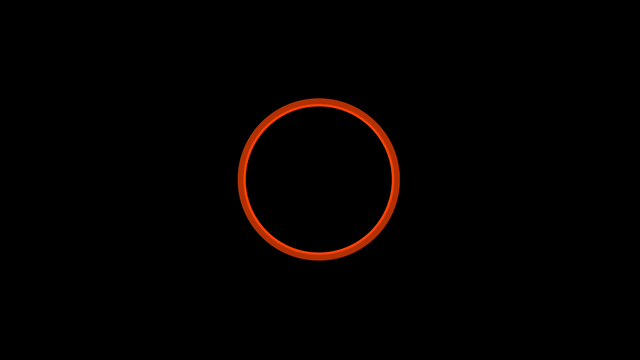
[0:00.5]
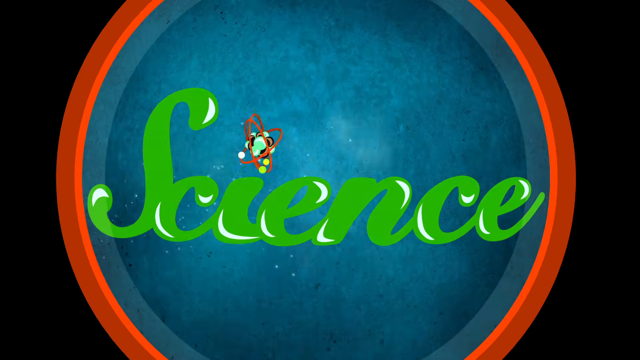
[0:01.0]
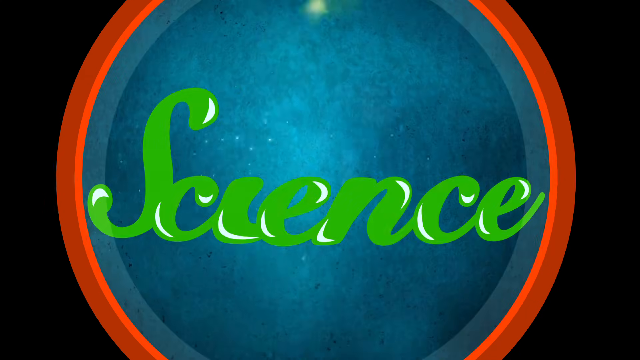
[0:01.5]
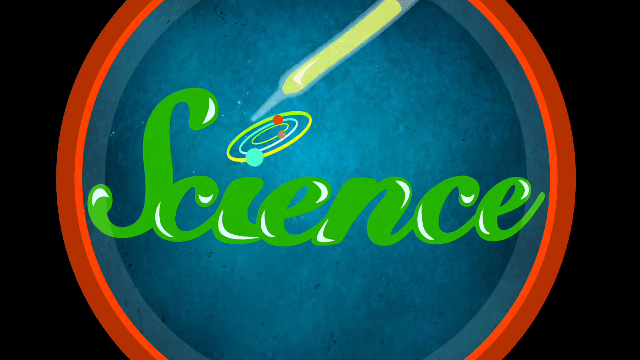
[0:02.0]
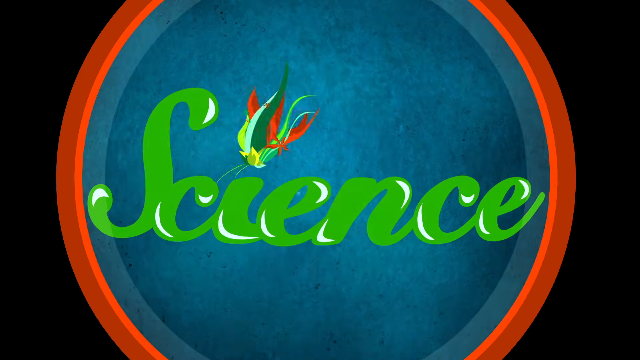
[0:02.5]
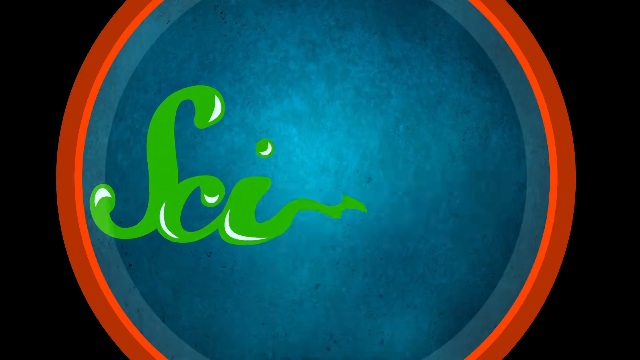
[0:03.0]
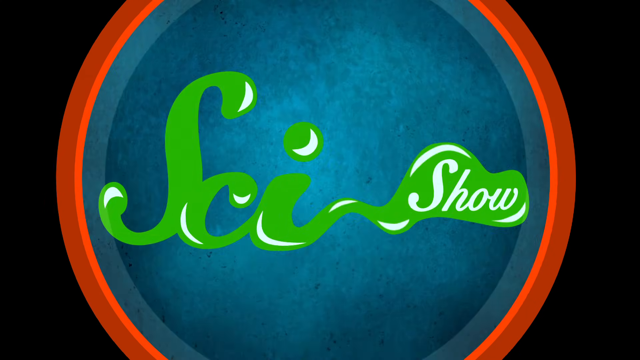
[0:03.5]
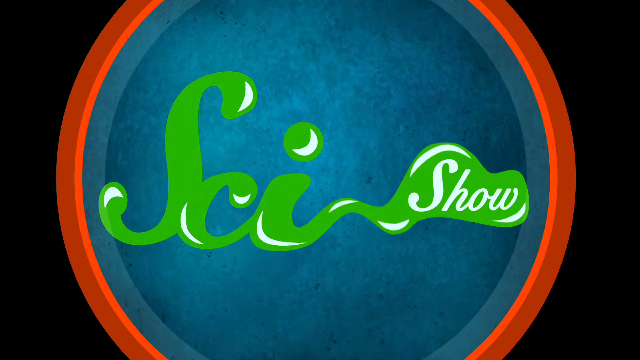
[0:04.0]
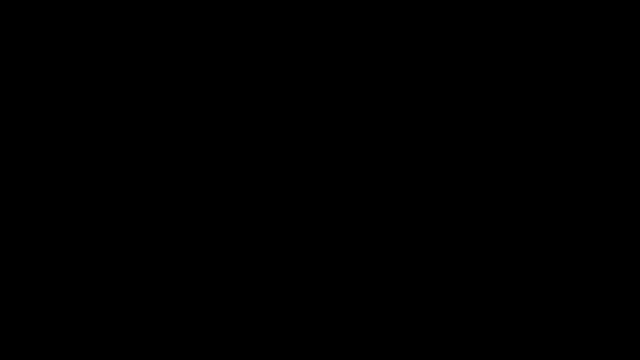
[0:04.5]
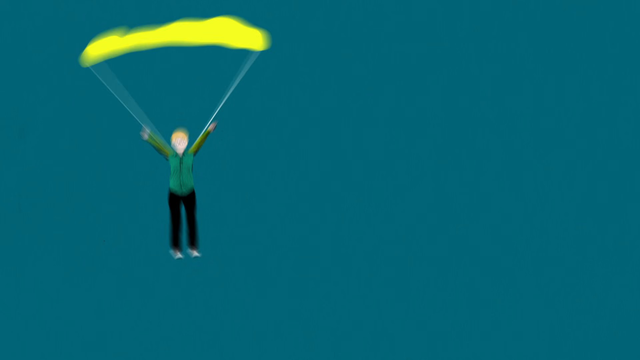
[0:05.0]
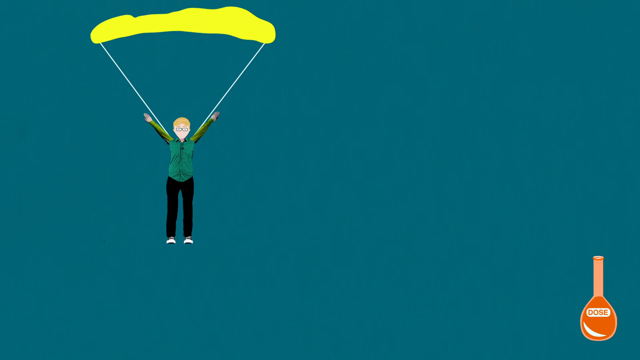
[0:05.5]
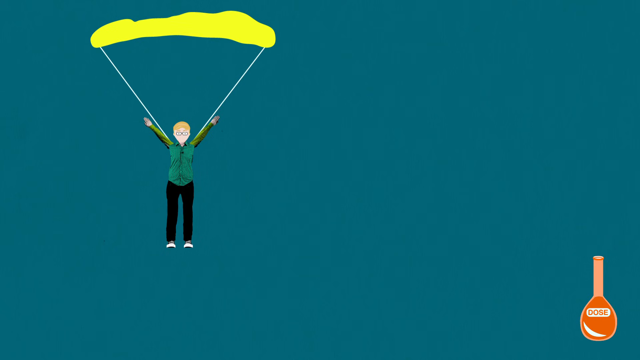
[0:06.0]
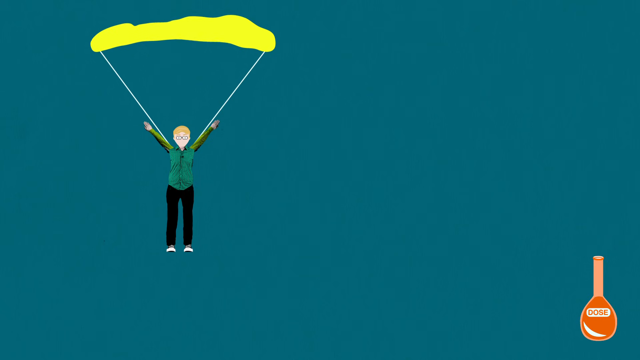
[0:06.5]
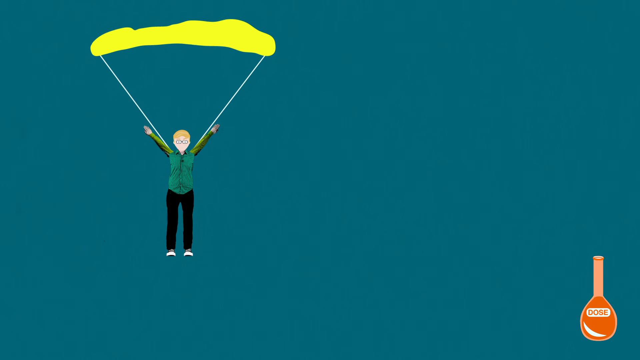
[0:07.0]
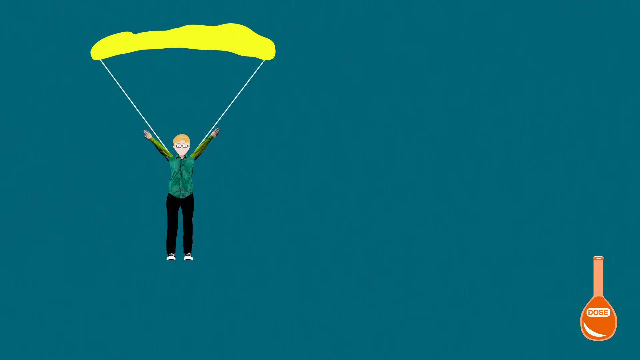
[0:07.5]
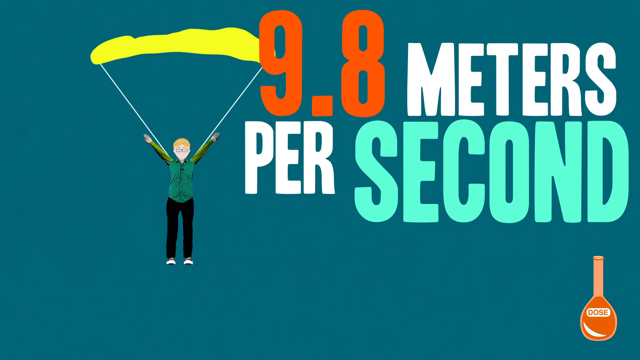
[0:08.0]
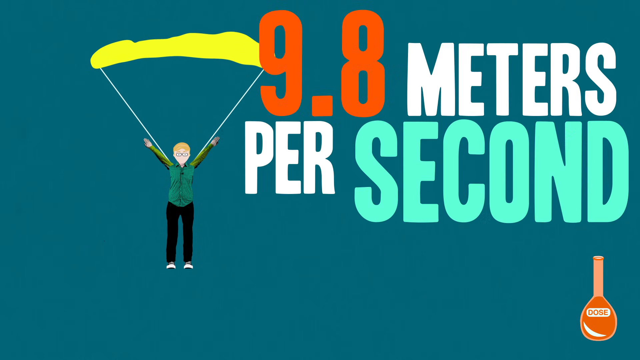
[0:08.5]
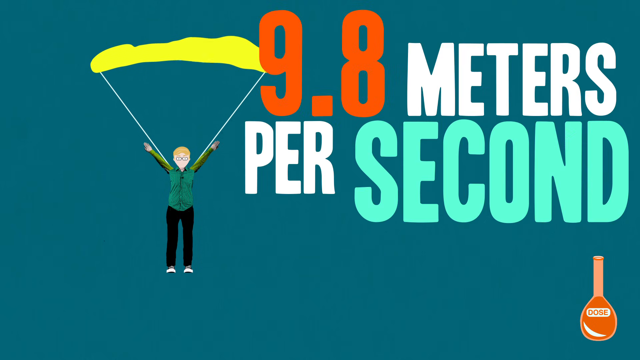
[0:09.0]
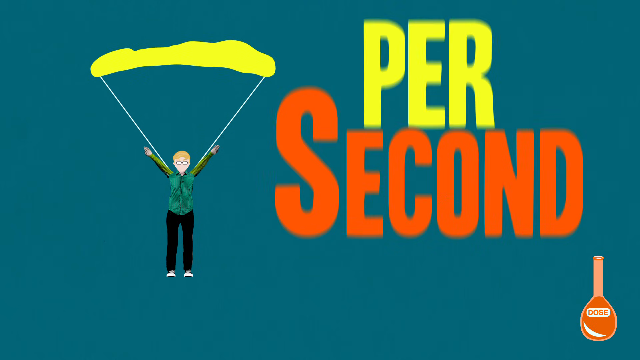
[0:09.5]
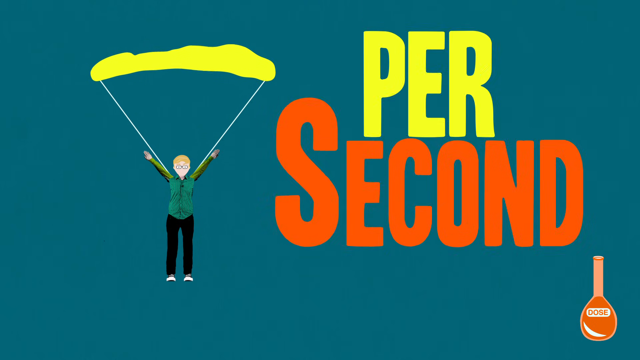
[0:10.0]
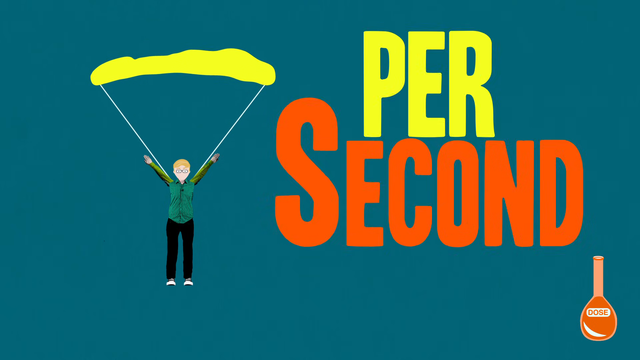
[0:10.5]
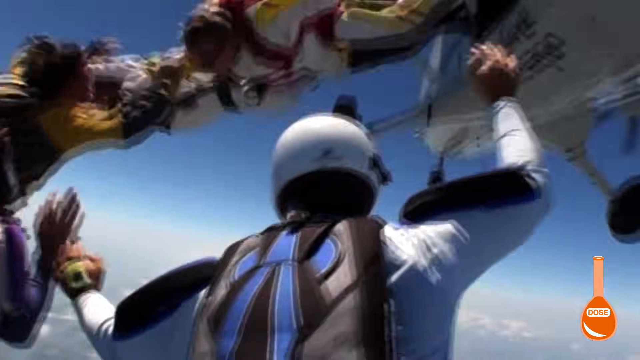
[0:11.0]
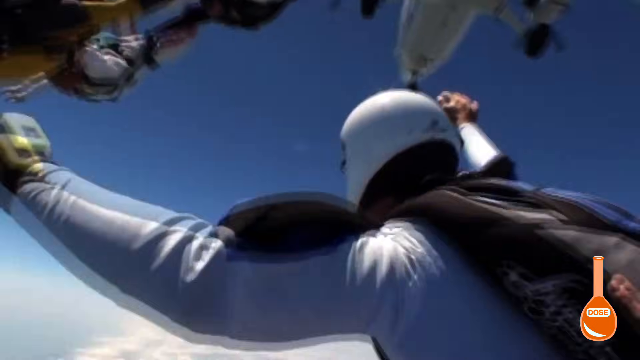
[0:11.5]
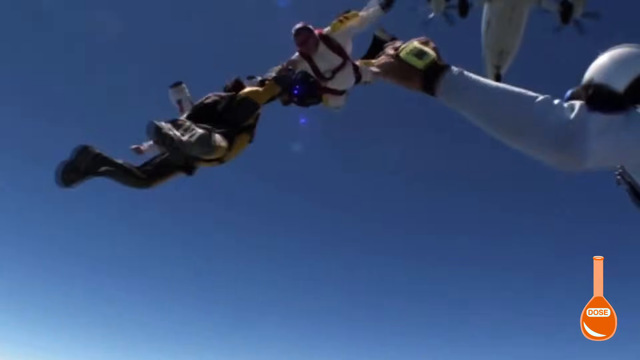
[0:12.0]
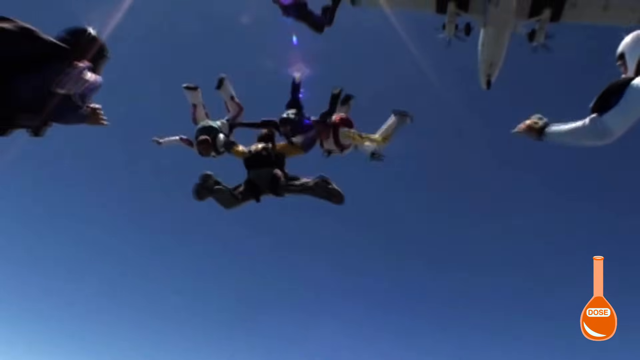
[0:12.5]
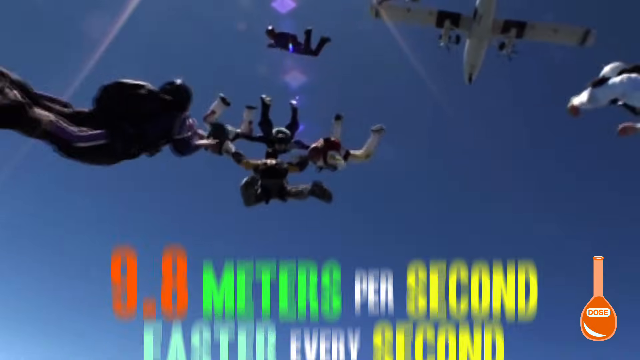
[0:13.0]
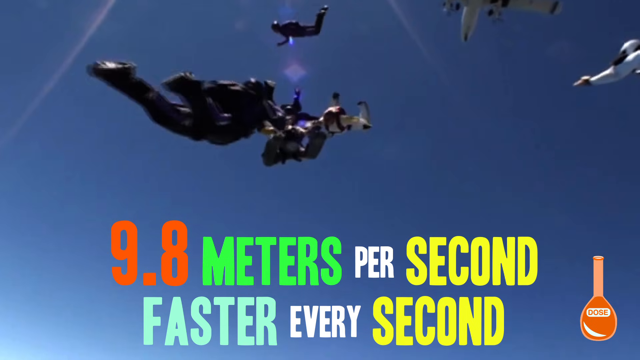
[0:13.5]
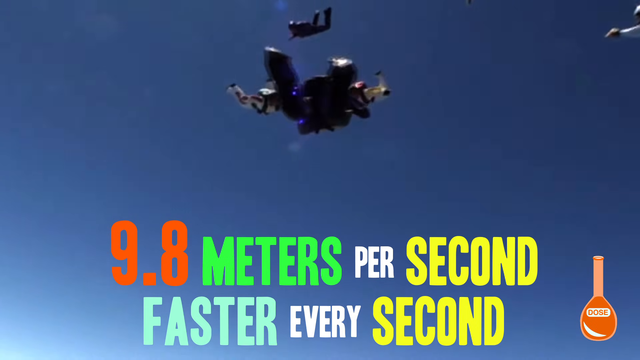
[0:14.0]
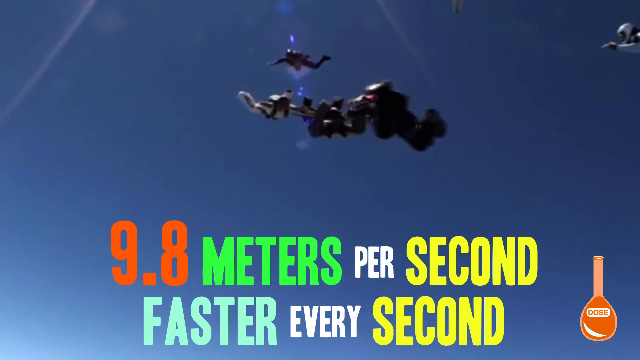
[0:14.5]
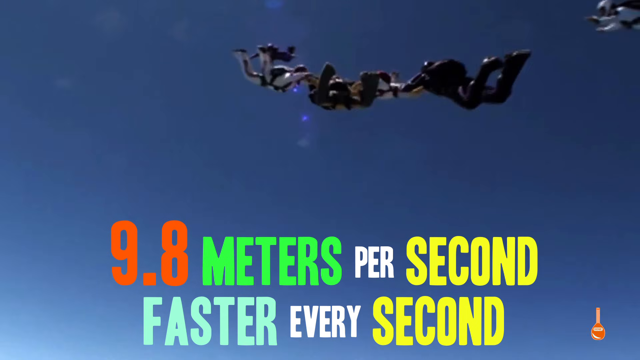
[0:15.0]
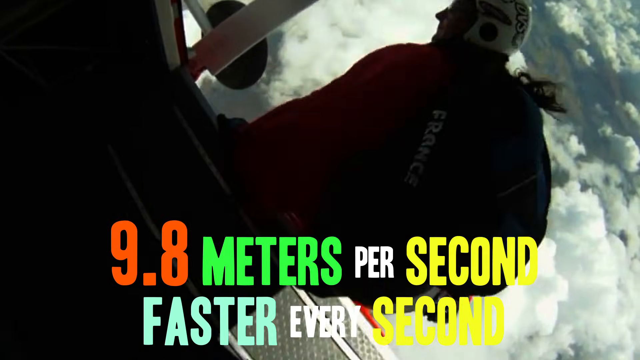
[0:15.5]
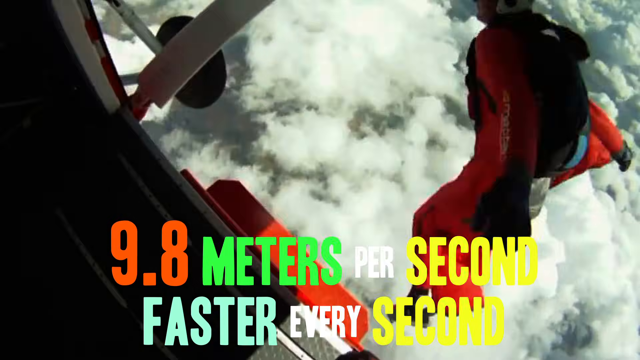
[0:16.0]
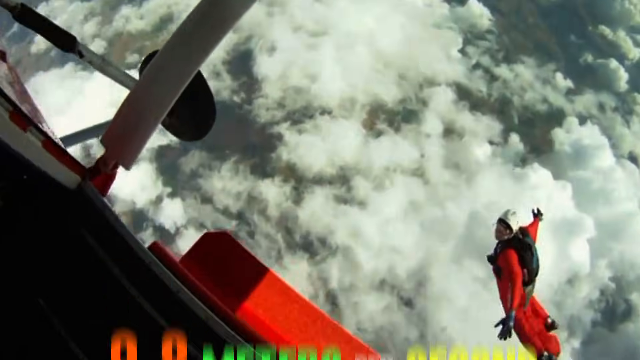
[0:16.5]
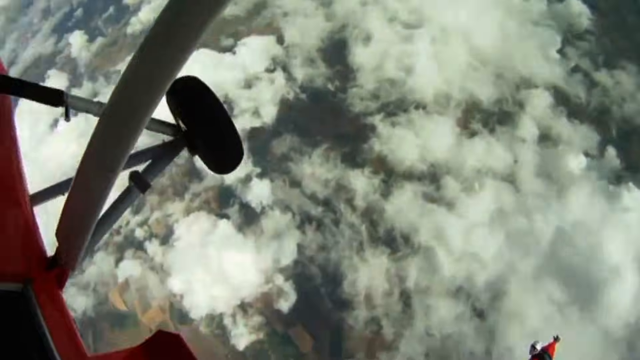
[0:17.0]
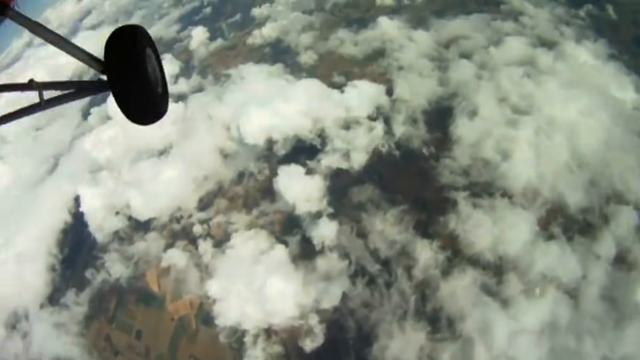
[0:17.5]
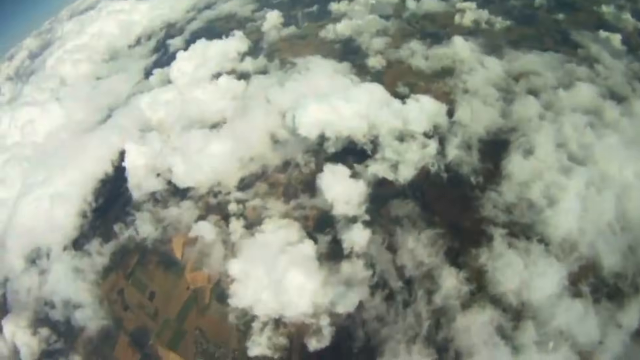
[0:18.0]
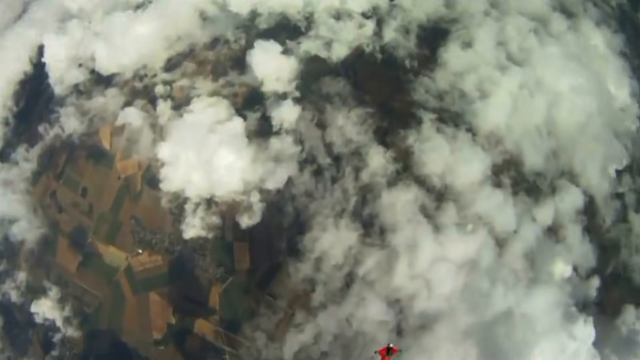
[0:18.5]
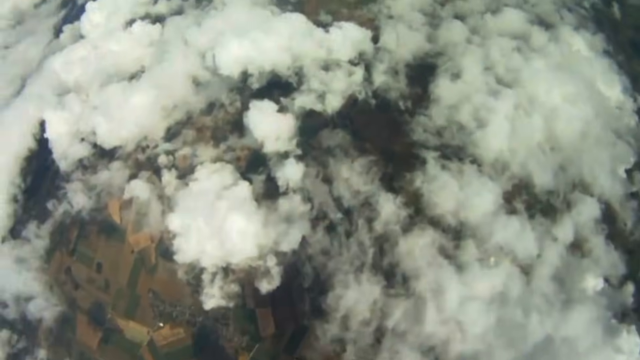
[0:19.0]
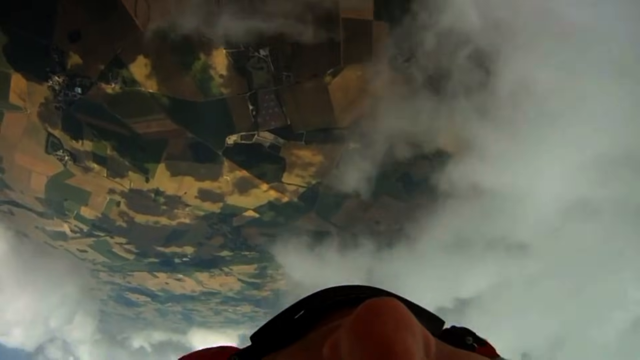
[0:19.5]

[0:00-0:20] The video opens on a logo against a black background: an orange circle filled in with blue, with green text that says "science." It sort of transforms into another logo reading "SciShow," then moves to an image with a kind of teal background showing a cartoon-style person with their arms up in the air. The figure wears a blue and green shirt with black pants and has a yellow parachute above them, and cartoonish text next to them reads "9.8 meters per second." As the screen transitions, "per second" appears again. Real footage follows of people skydiving, jumping out of a plane and then gathering together, grouping up and grabbing hands, as the text again reads "9.8 meters per second faster every second."